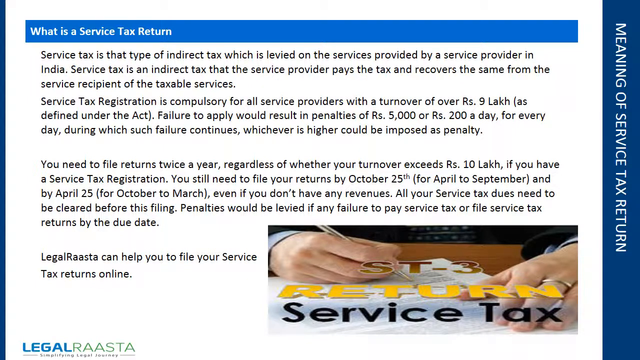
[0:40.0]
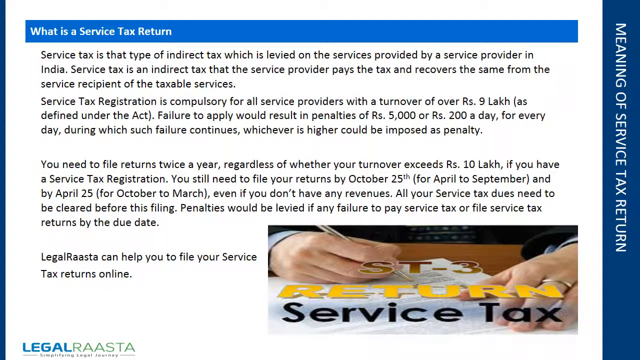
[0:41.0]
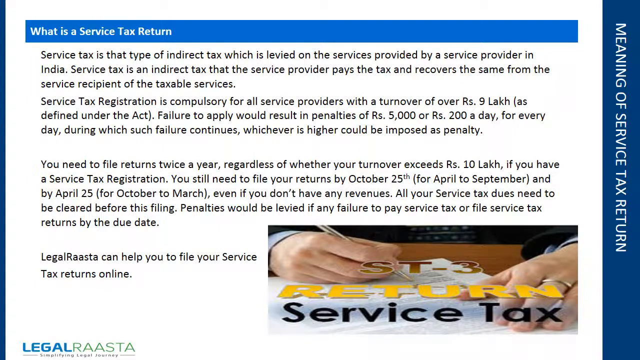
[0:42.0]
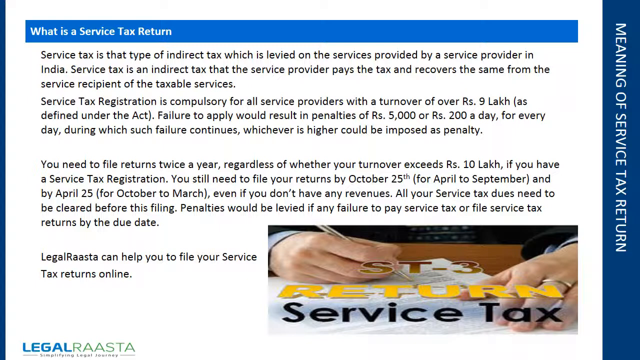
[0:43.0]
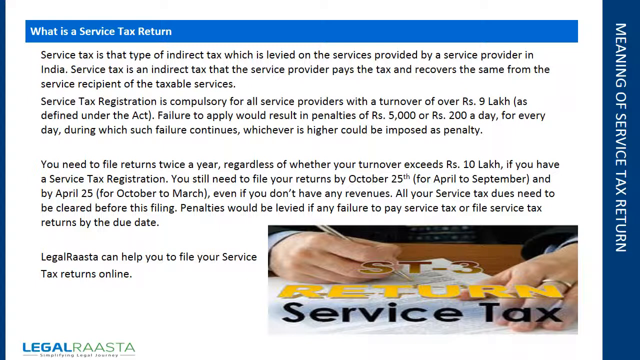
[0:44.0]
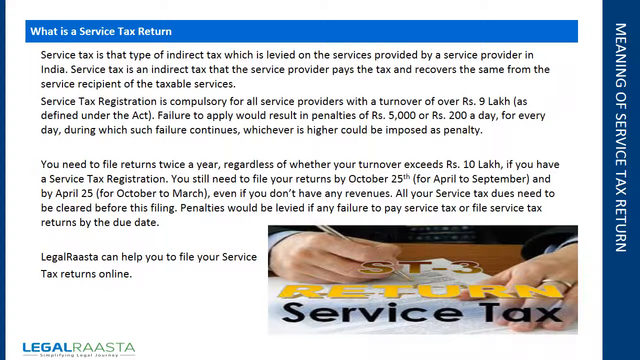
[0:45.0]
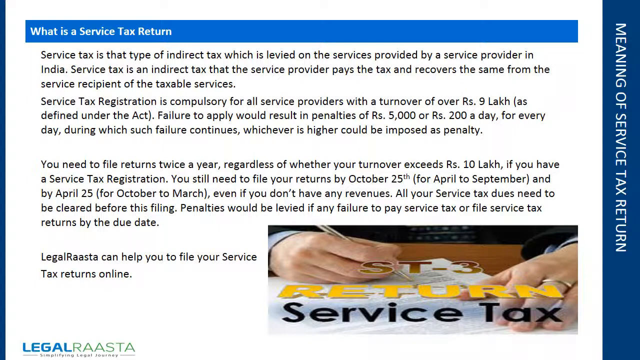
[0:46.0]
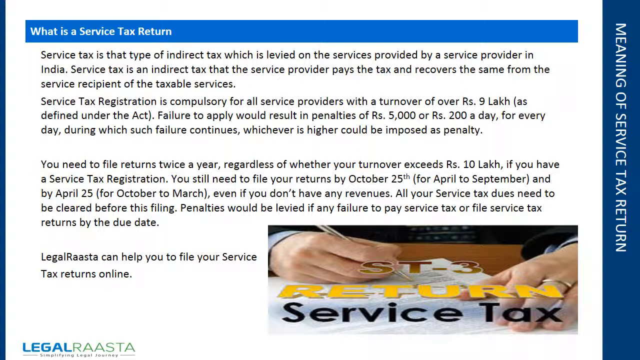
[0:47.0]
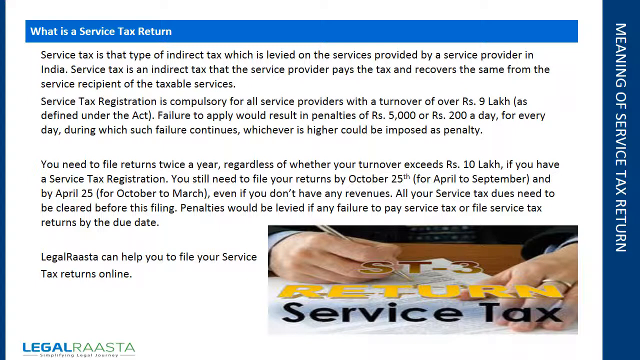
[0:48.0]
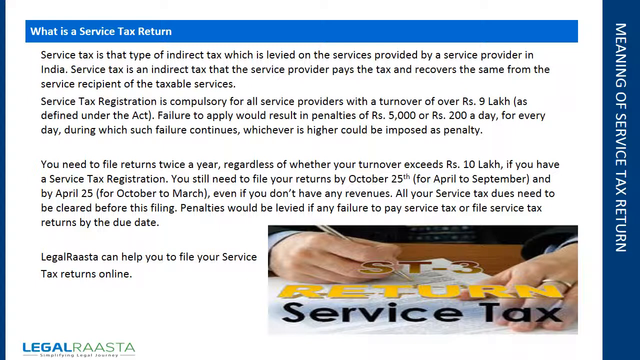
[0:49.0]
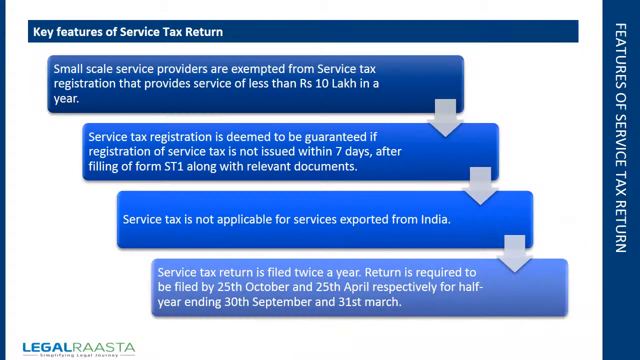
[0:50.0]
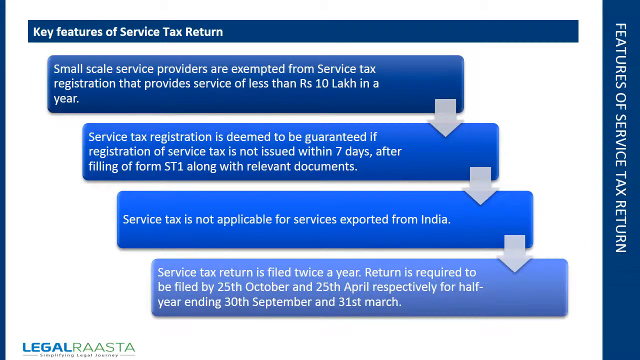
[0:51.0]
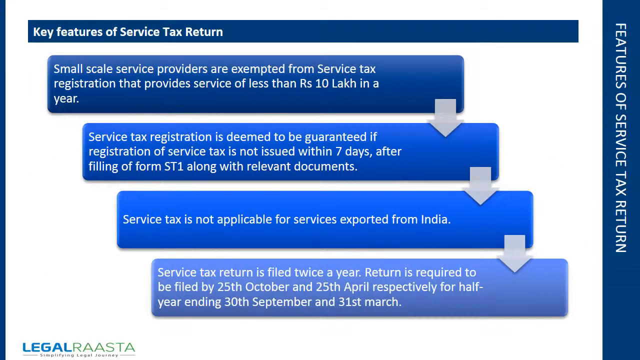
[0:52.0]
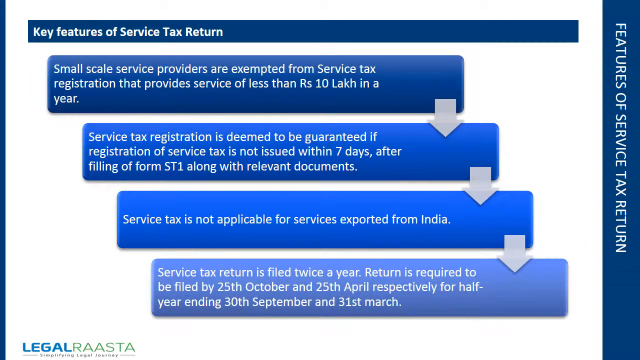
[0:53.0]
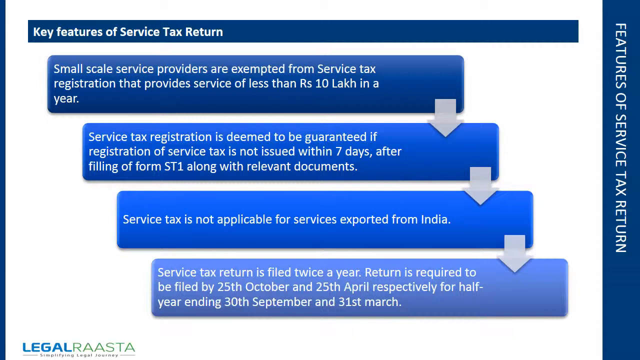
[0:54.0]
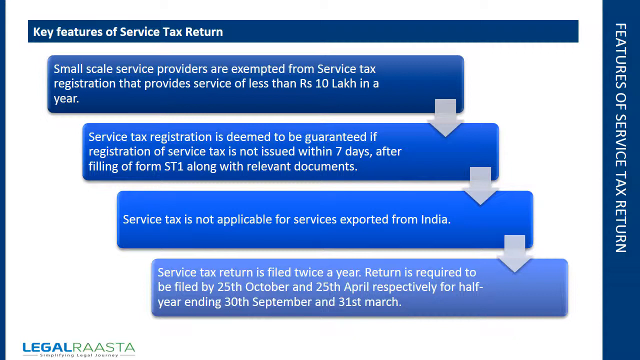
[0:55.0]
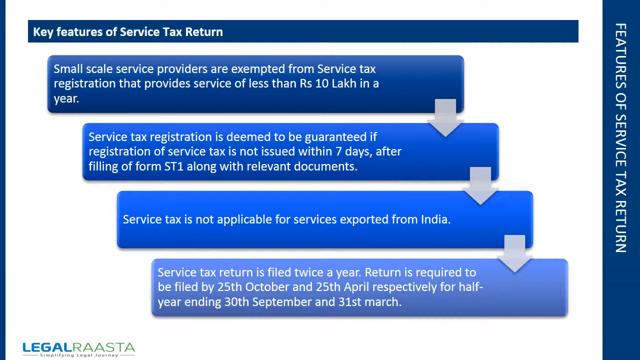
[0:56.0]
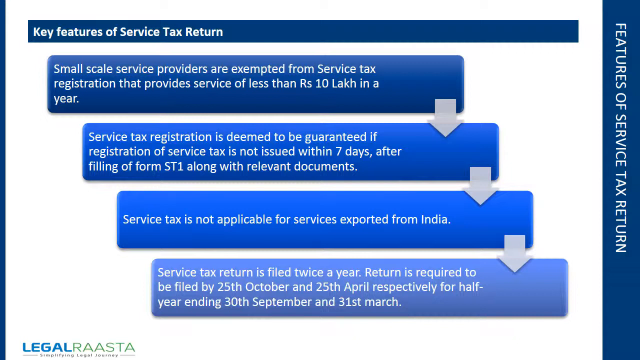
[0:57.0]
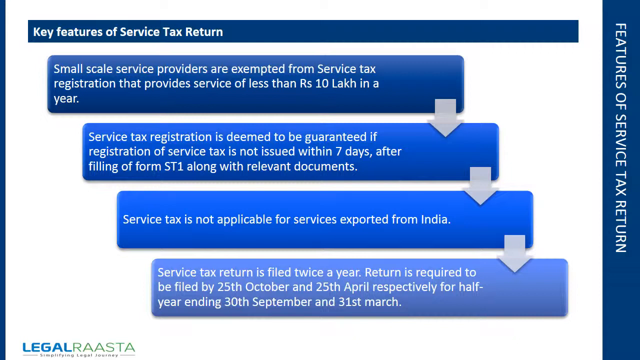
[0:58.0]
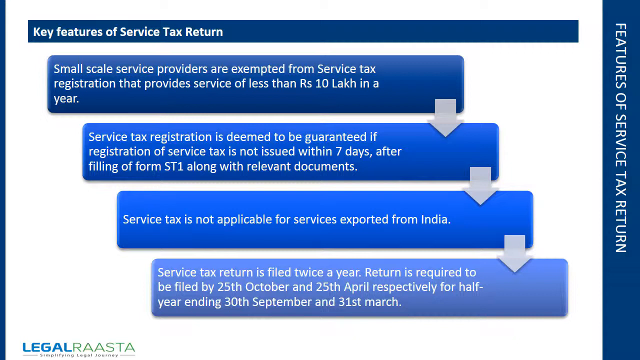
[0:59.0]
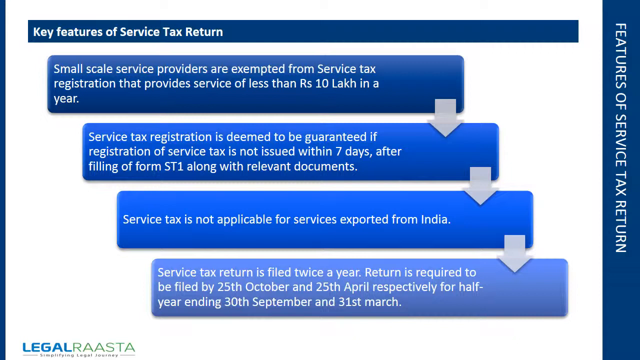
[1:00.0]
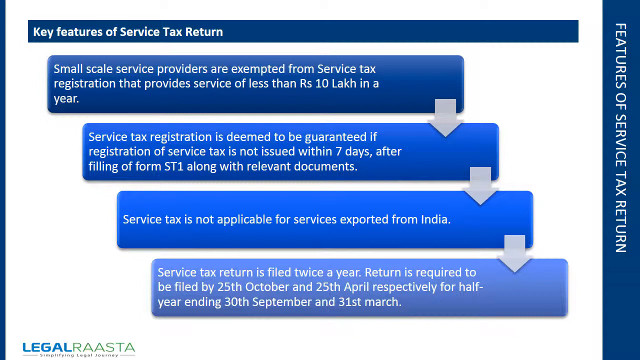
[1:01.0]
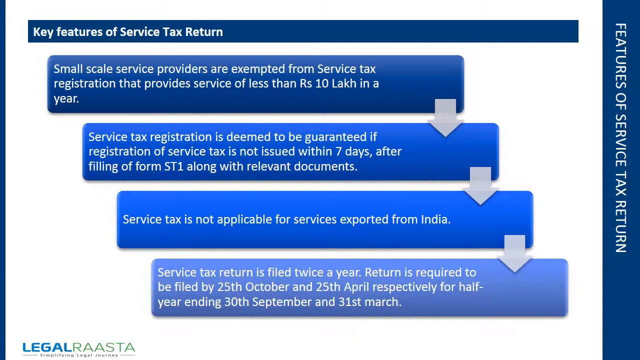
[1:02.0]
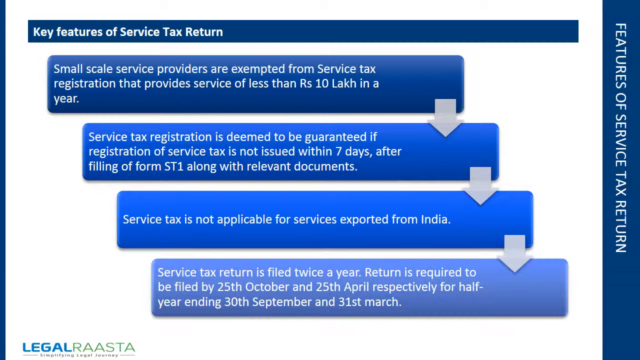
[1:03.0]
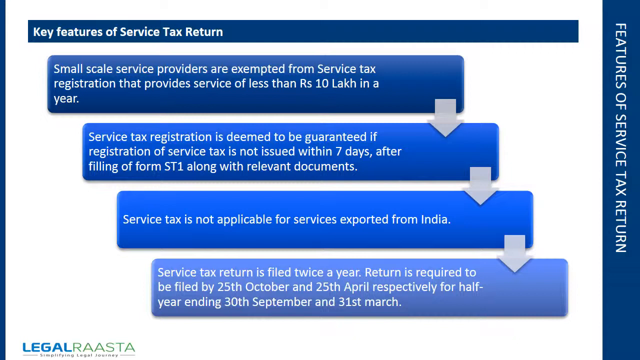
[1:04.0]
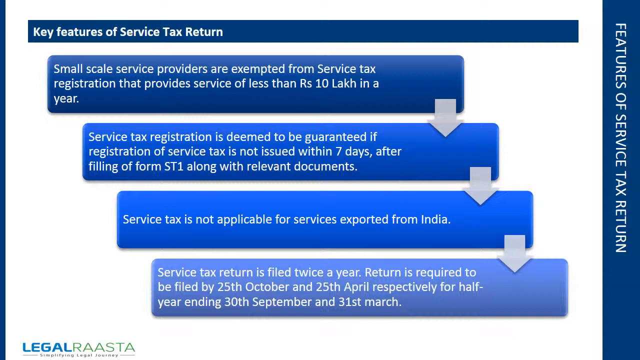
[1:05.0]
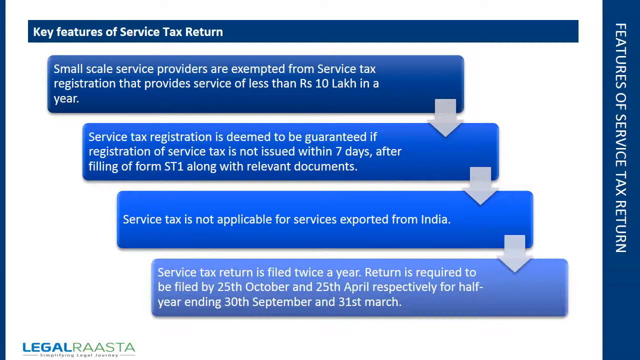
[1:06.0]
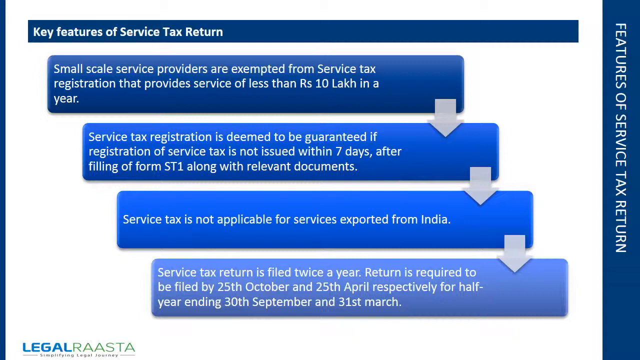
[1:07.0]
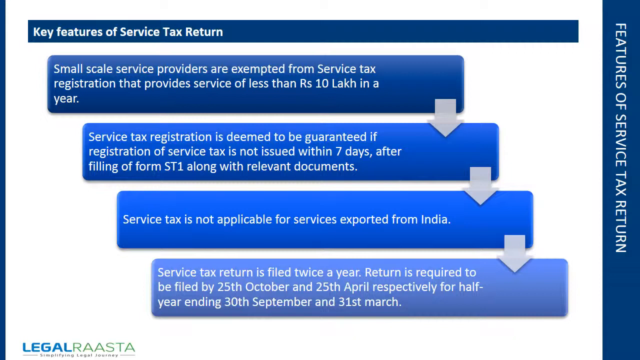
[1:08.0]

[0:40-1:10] A slide gives the meaning of a service tax return. At the top, a blue header box contains the white text "what is a service tax return." Beneath it, a few paragraphs of black text give information on what a service tax return is, how it works in India, how service tax registration works, penalties for not complying properly, and the dates by which the return must be filed. At the bottom right is an image of a close-up of a man signing a document; only his hands holding a pen over white paper are visible, and over the image is the text "ST-3 return service tax." The next slide has a dark blue header box at the top with white text reading "key features of service tax return," and in the far right margin a dark blue vertical block with white letters reading "features of service tax return." Below is a flow chart of some sort. At the top, a dark blue rectangular box reads in white font "small-scale service providers are exempted from service tax registration that provides service of less than RS10 lakh in a year." Beneath it and slightly shifted to the right, a lighter blue rectangular box reads "service tax registration is deemed to be guaranteed if registration of service tax is not issued within seven days after filing a form ST1 along with the relevant documents." Beneath that and slightly skewed to the right, a slightly lighter blue box reads "service tax is not applicable for service exported from India." Beneath that, shifted to the right, a lighter blue box reads "service tax return is filed twice a year. Return is required to be filed by 25th October and 25th April, respectively, for half year ending 30th September and 31st March." A light grey arrow points down from the right side of each of the boxes.